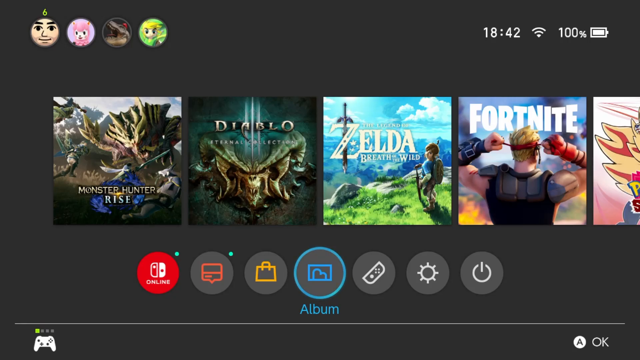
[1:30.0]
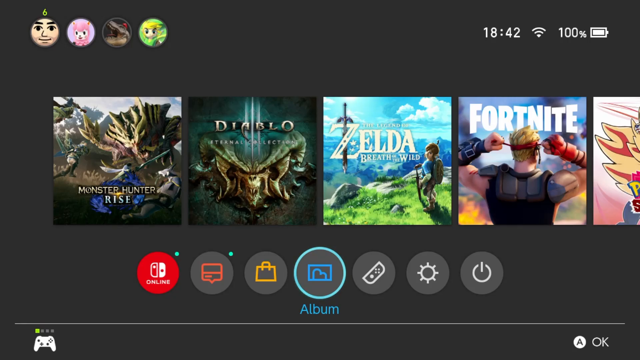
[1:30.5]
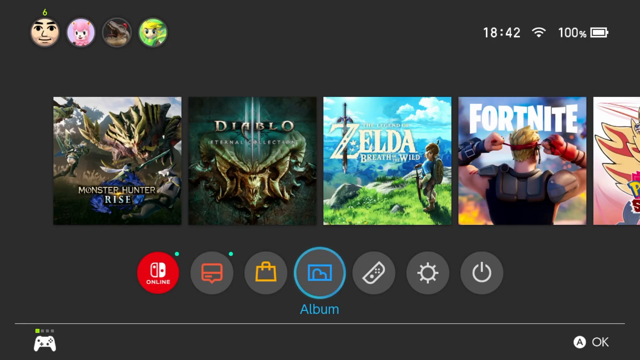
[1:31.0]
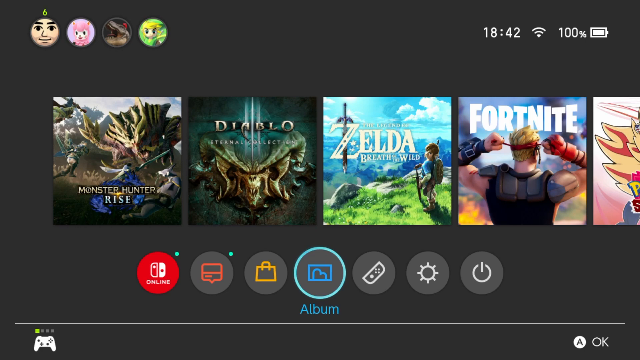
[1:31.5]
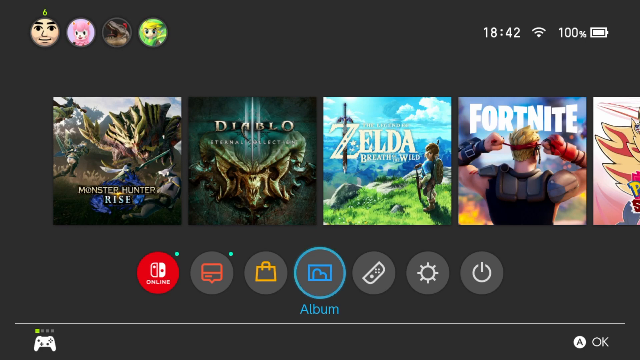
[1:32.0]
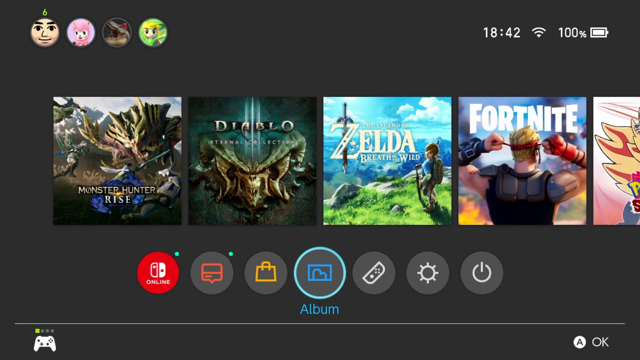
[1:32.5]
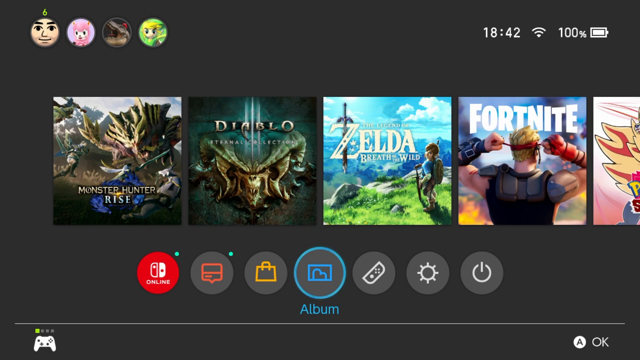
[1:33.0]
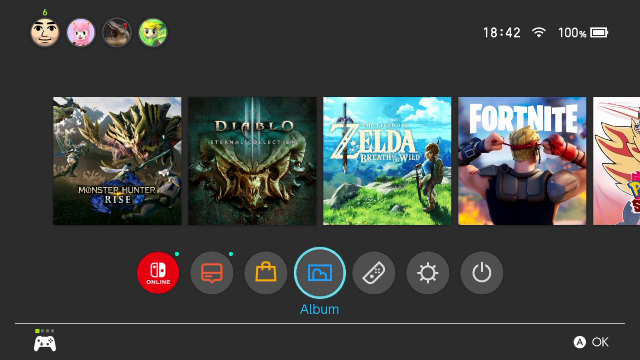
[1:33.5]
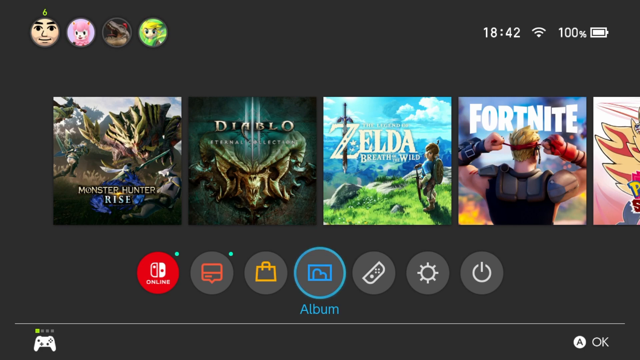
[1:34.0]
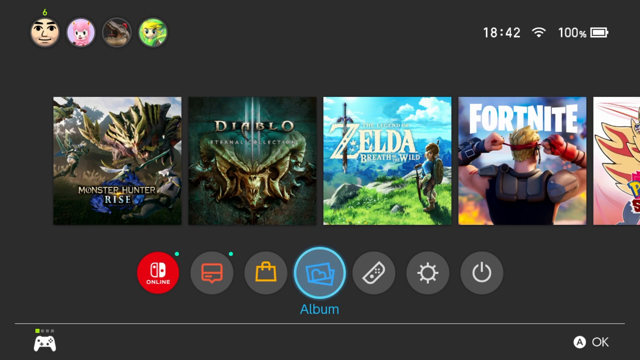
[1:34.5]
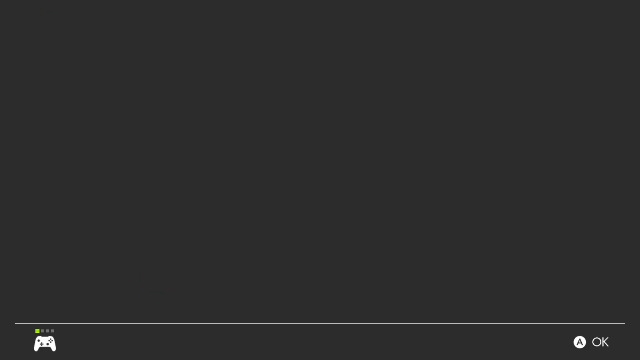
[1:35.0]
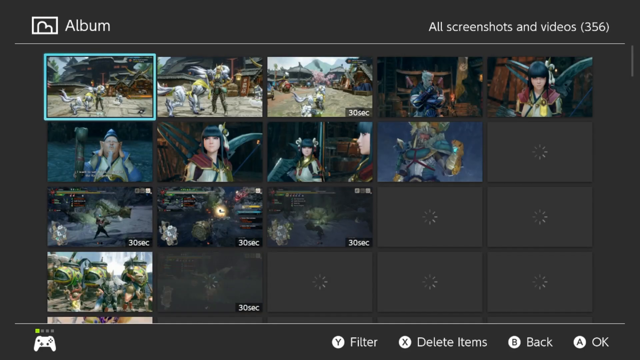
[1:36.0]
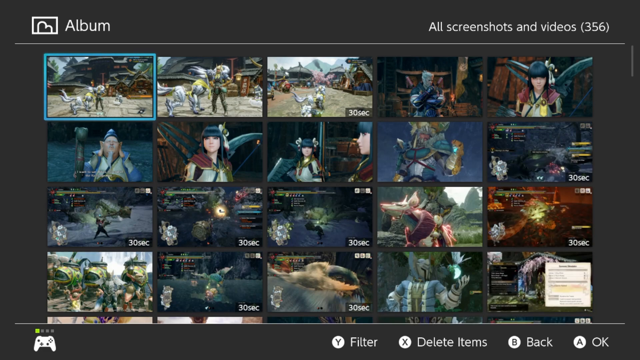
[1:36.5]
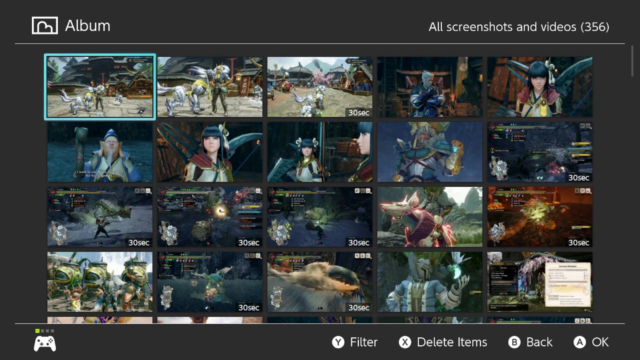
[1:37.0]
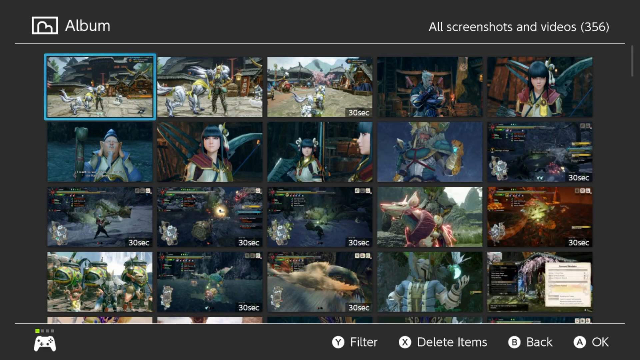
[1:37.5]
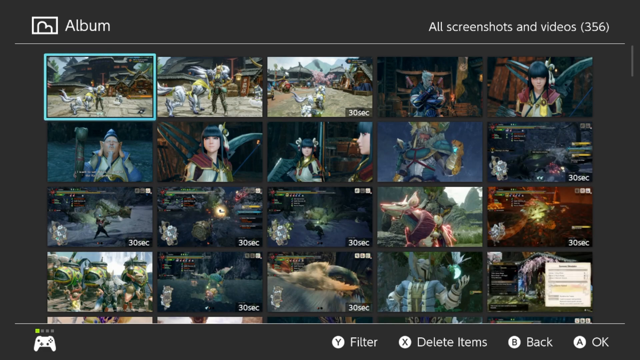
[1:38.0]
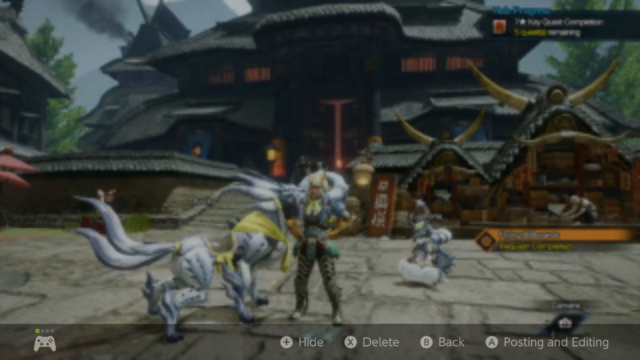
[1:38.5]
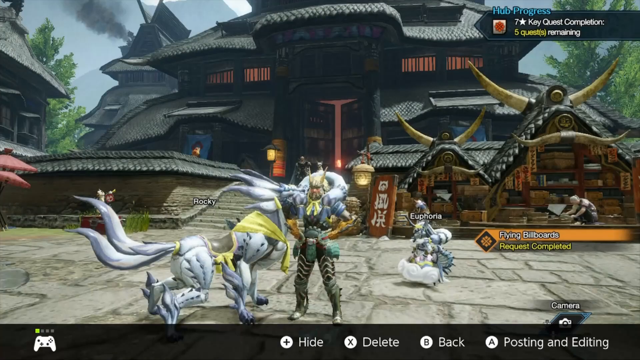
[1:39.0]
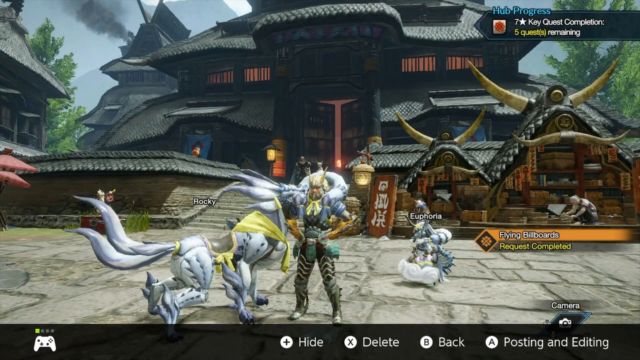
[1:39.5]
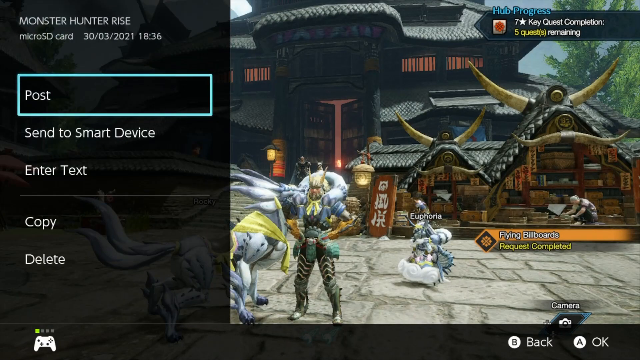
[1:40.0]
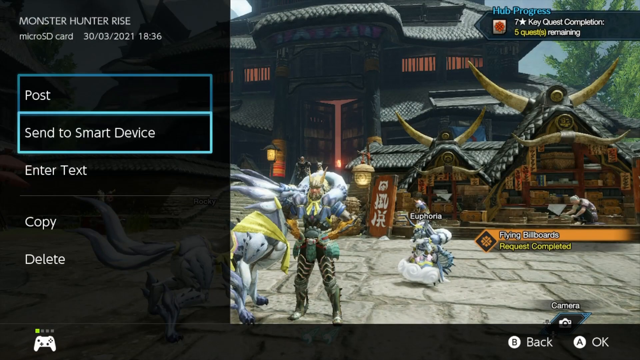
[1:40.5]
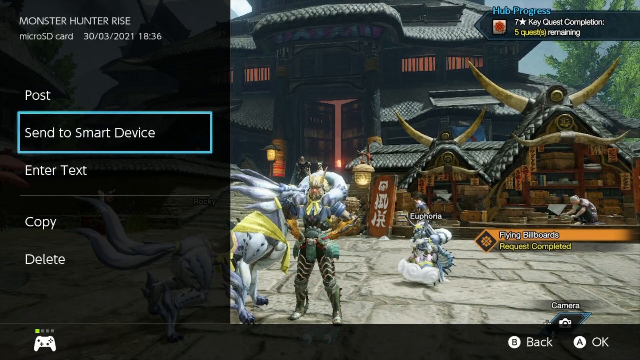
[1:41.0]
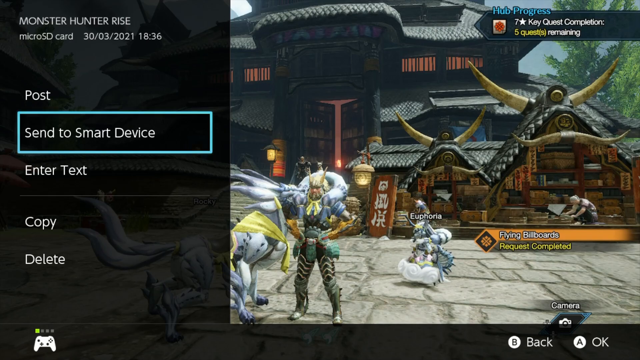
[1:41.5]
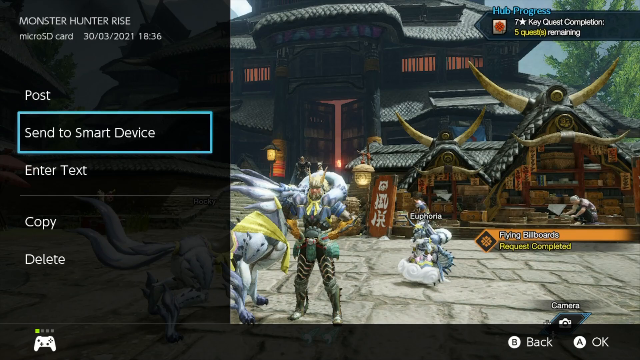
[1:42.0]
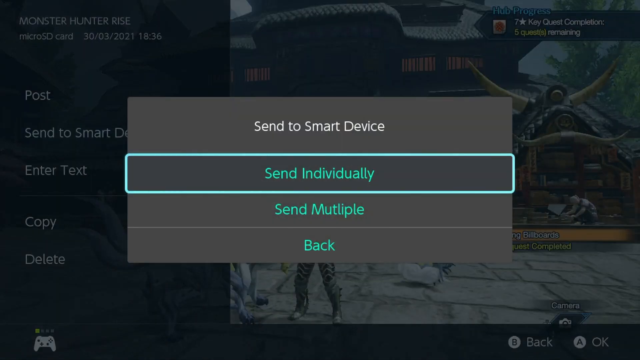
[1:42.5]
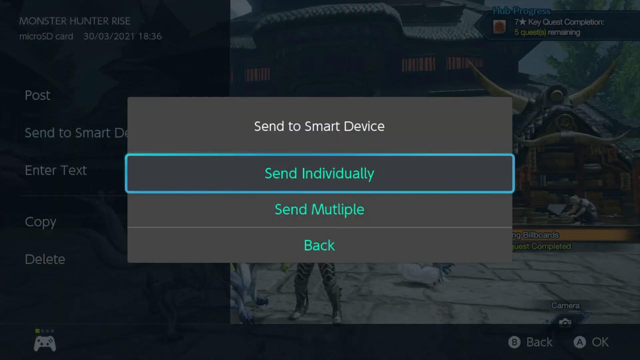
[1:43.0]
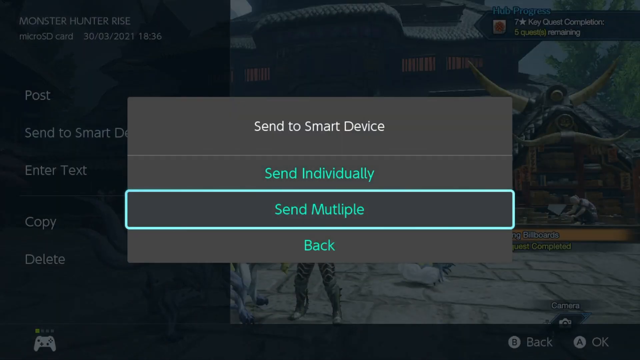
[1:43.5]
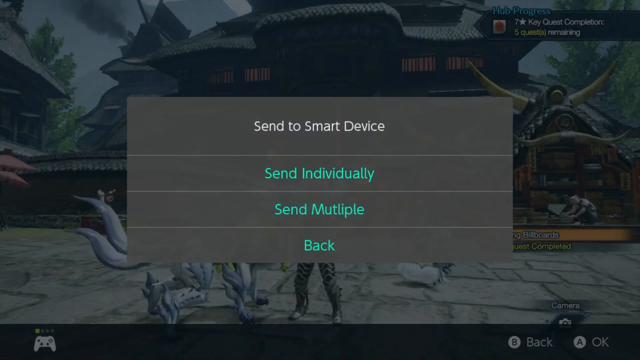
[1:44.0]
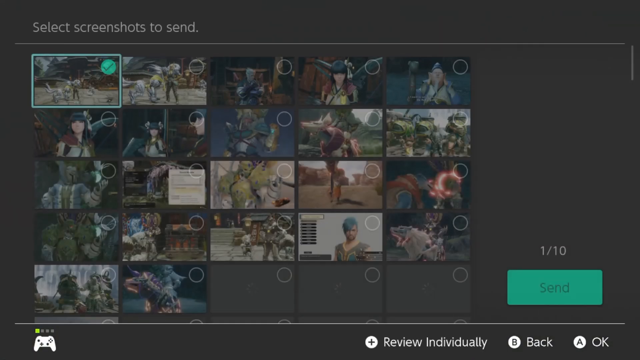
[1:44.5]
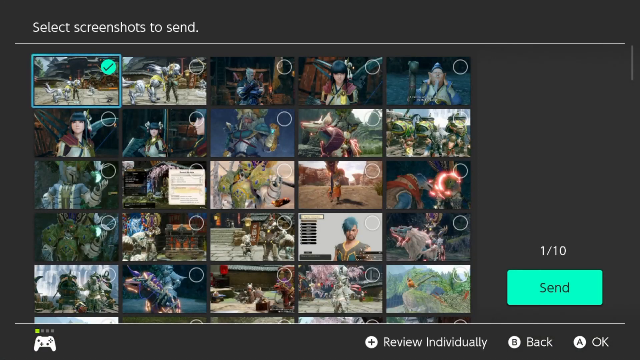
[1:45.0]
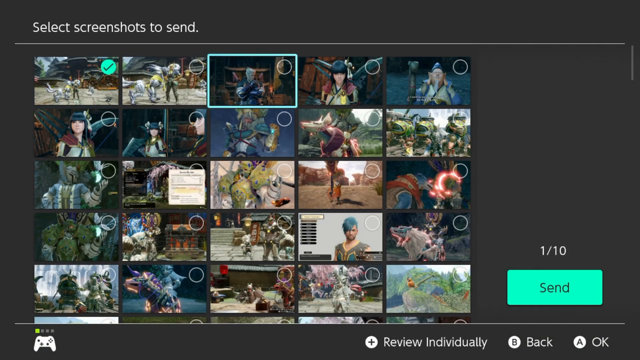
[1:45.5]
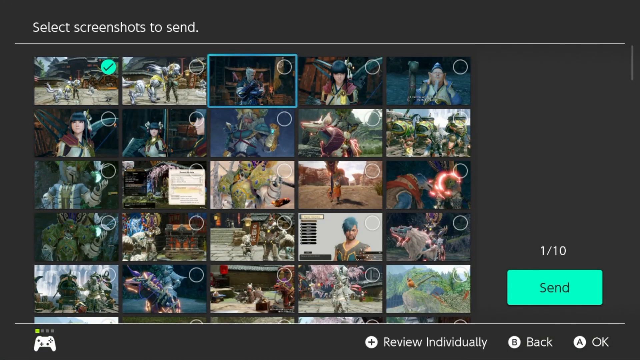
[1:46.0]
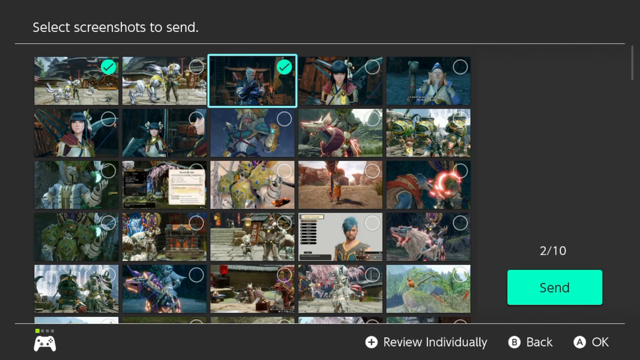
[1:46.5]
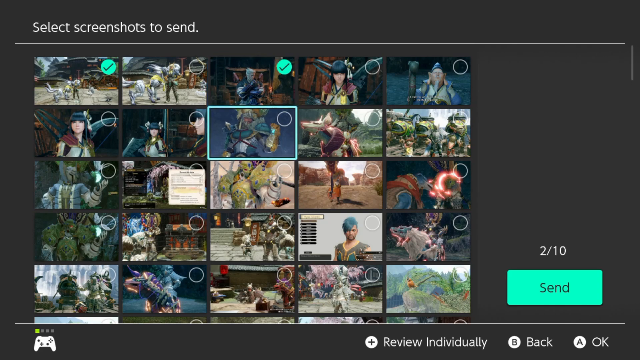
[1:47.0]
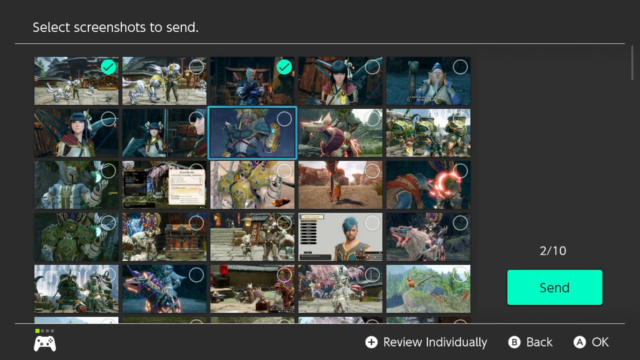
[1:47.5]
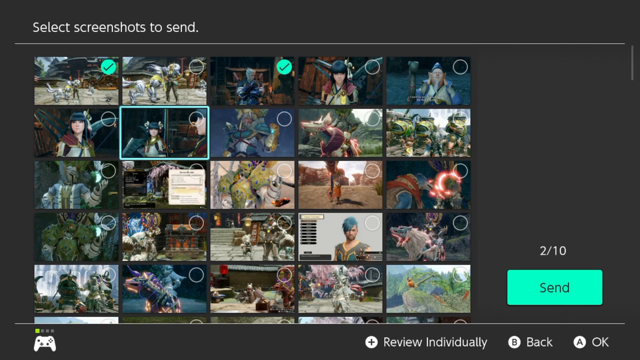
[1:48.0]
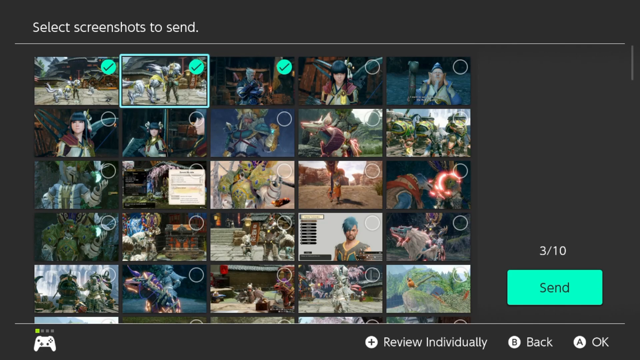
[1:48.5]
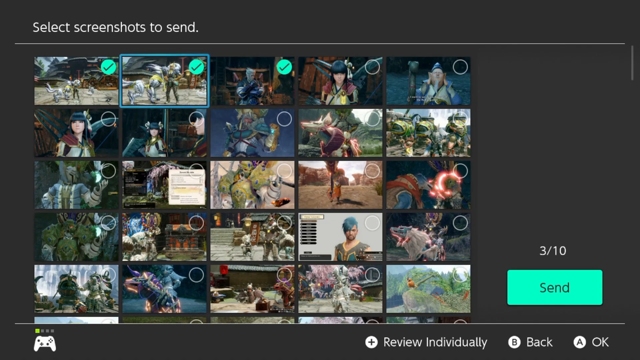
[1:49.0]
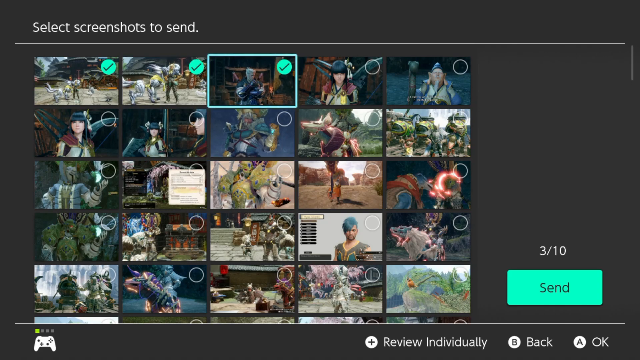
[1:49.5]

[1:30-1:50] The main Switch screen returns. The user opens the album folder on the Switch and goes into the first image, again of the character, with the two pets: the three-tailed one on the left and the other pet on the right. They are standing in front of the big building in the town square, with the markets visible on either side. A left sidebar opens with options for the picture, showing Monster Hunter Rise, on a micro SD card, taken on March 30, 2021, at 18:36. Options pop up: Post, Send to Smart Device, Enter Text, Copy, Delete. The user chooses Send to Smart Device, and further options appear: Send Individually, Send Multiple, or Back. The user chooses Send Multiple, and another screen opens for selecting up to ten images. They go through selecting images: the first, the third, the second.